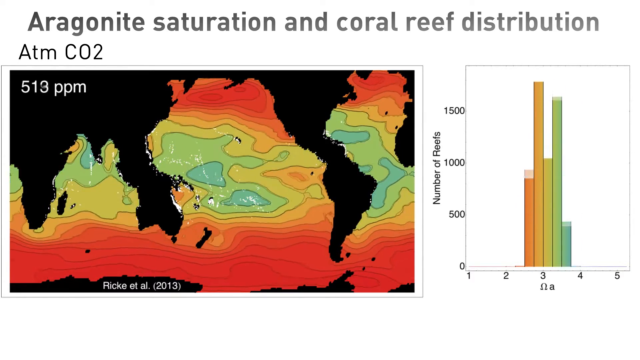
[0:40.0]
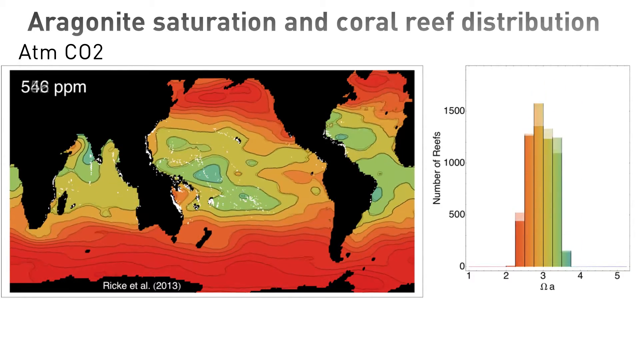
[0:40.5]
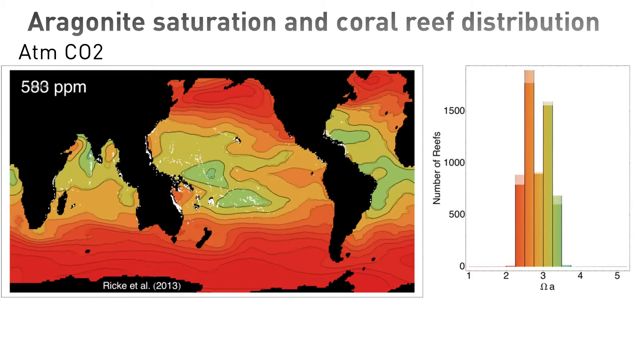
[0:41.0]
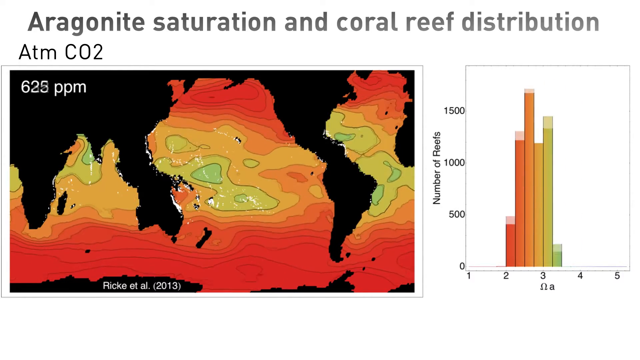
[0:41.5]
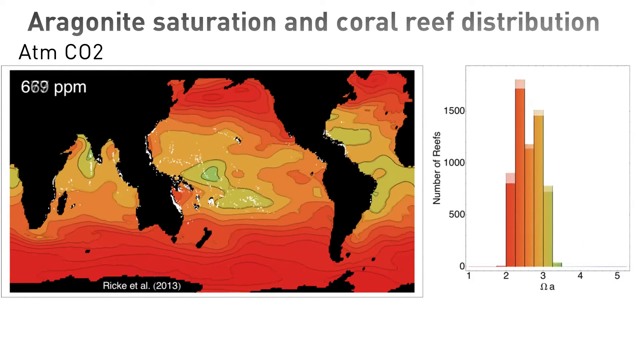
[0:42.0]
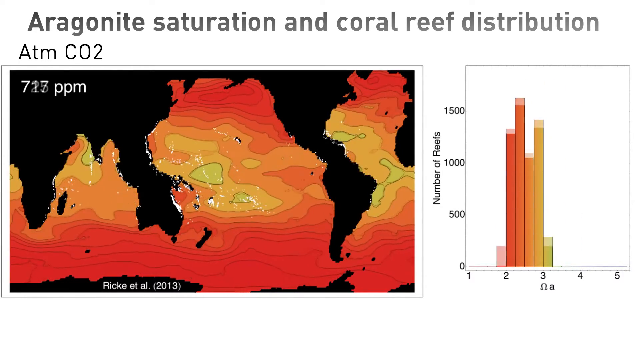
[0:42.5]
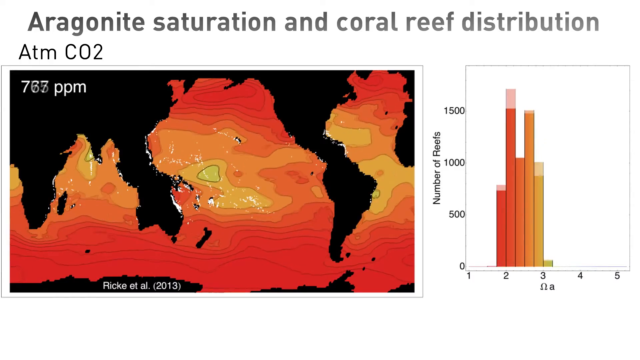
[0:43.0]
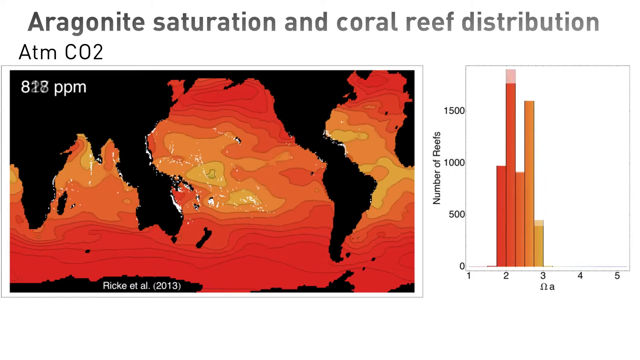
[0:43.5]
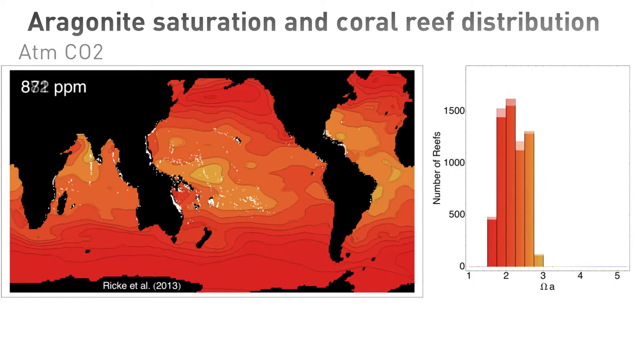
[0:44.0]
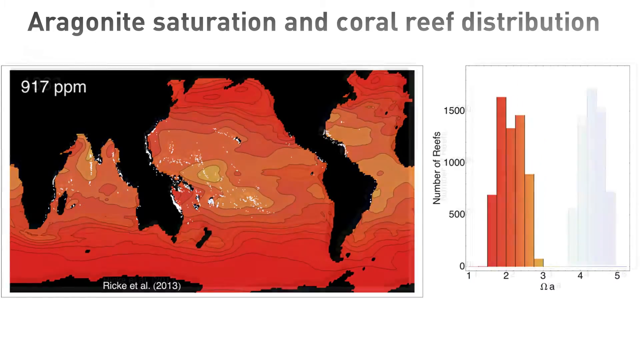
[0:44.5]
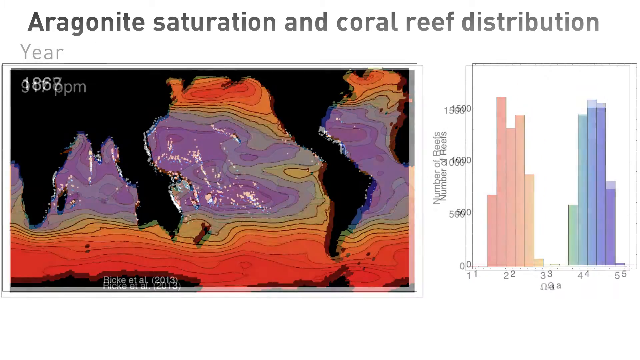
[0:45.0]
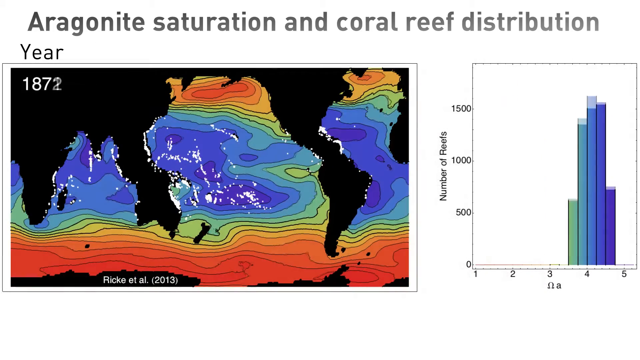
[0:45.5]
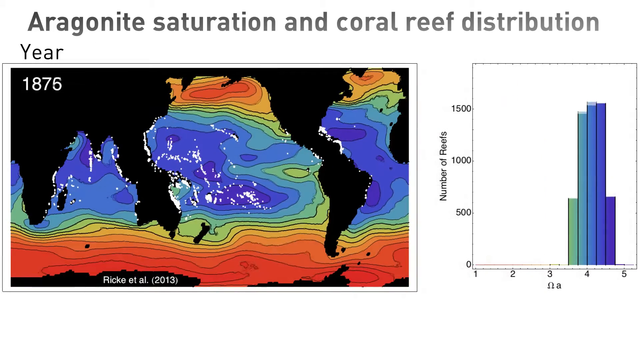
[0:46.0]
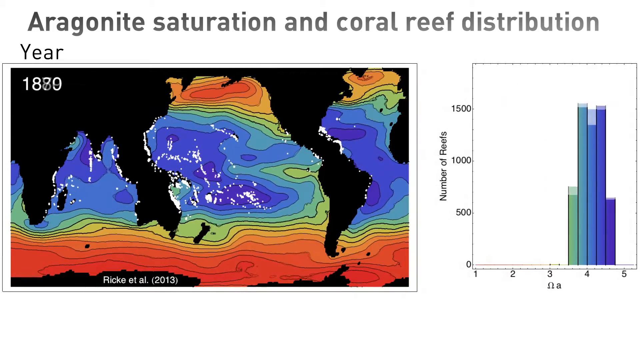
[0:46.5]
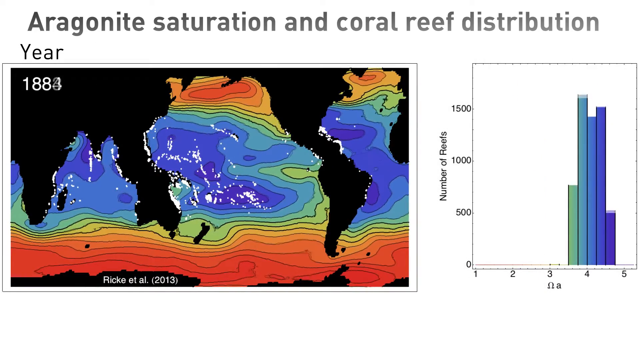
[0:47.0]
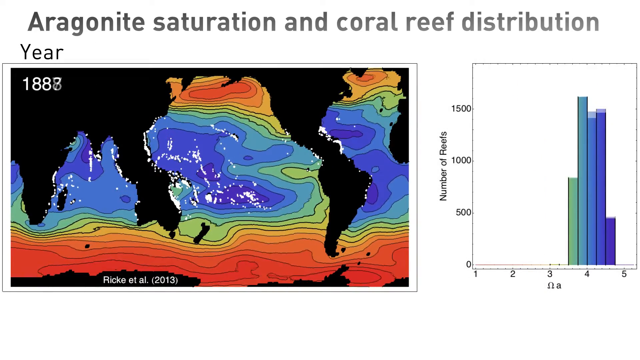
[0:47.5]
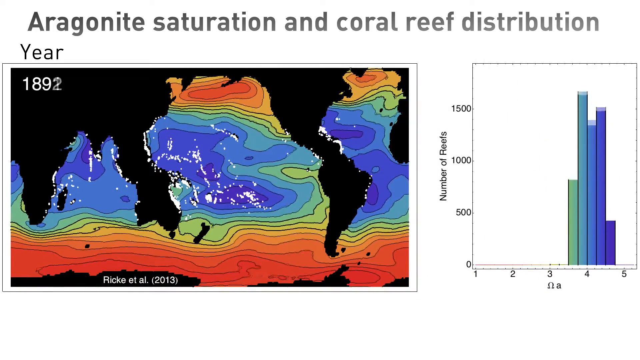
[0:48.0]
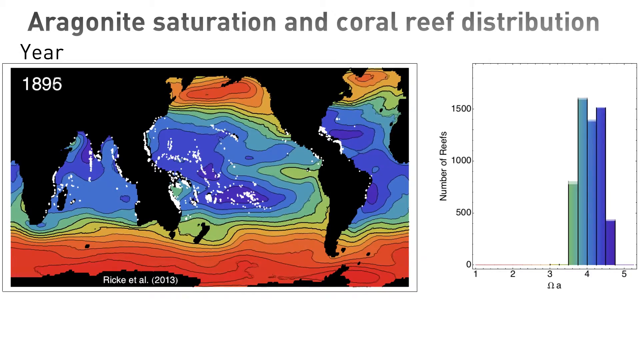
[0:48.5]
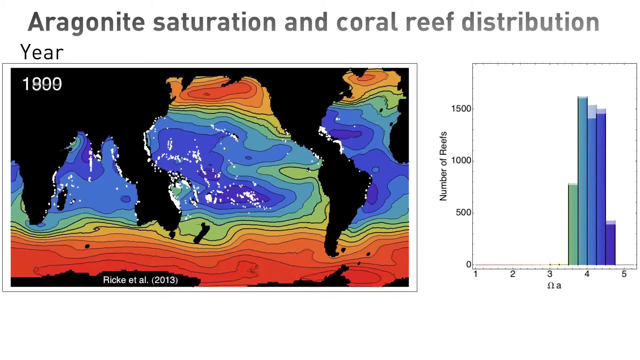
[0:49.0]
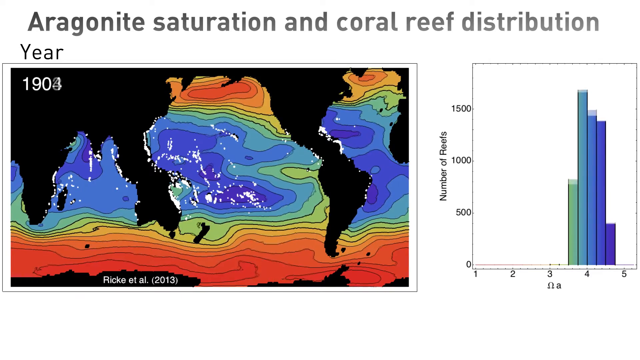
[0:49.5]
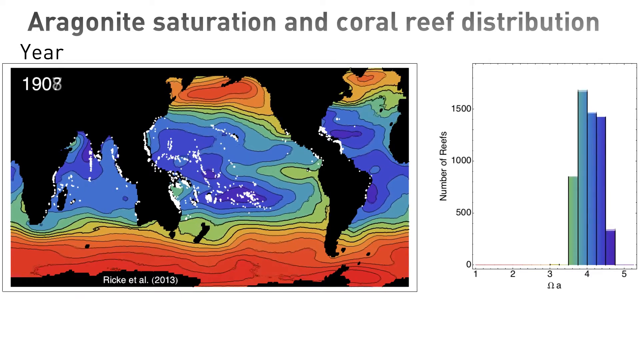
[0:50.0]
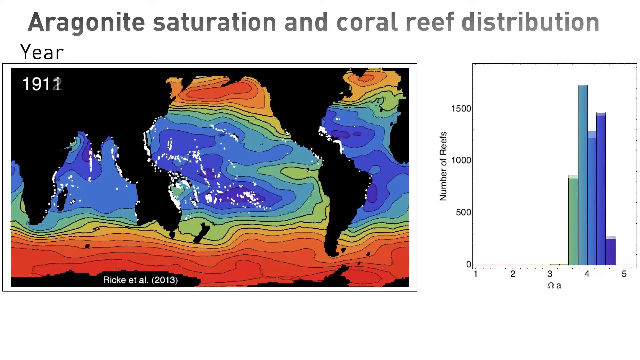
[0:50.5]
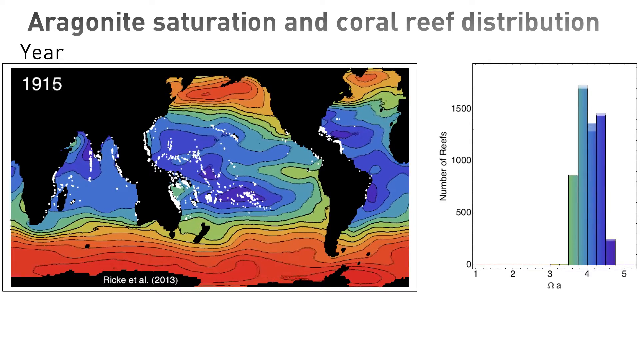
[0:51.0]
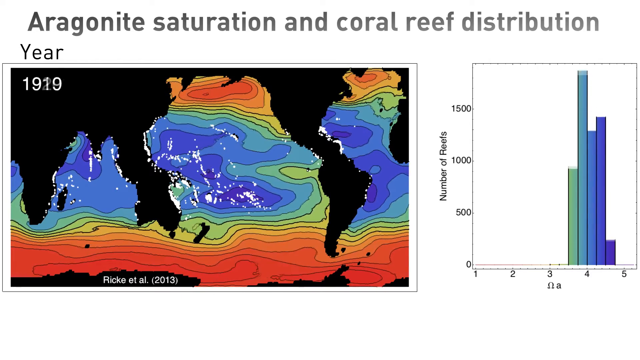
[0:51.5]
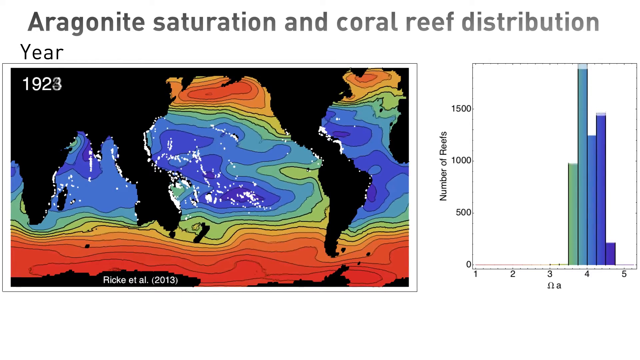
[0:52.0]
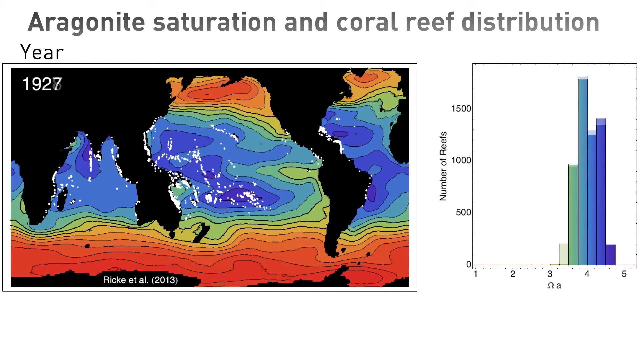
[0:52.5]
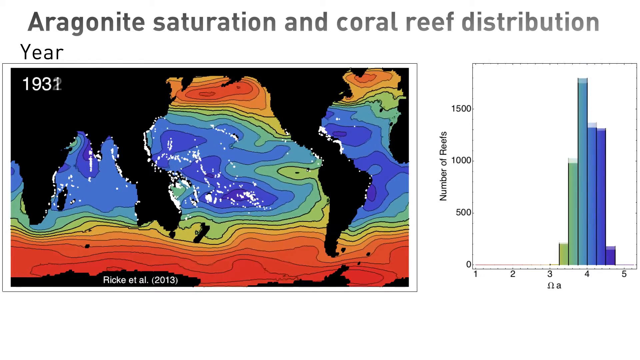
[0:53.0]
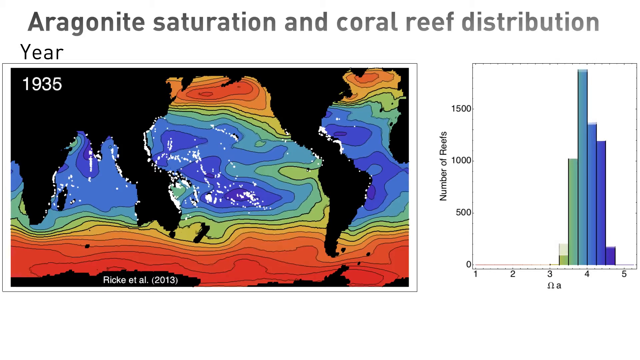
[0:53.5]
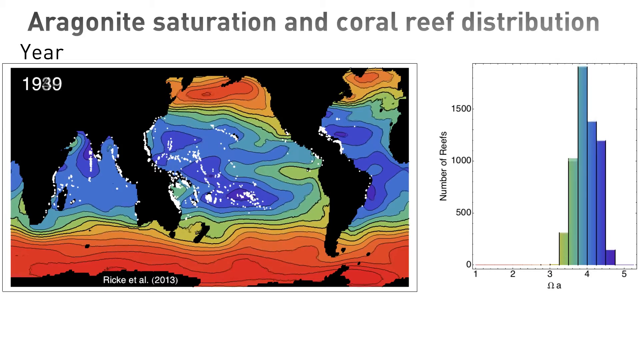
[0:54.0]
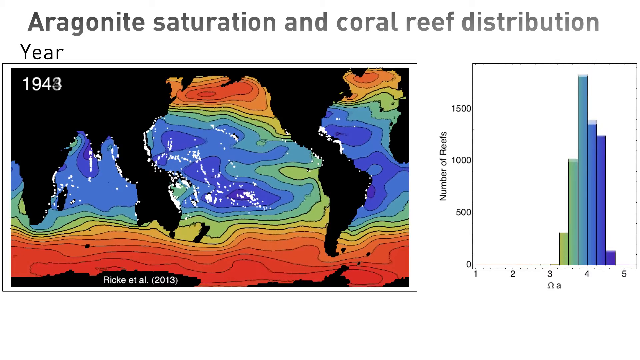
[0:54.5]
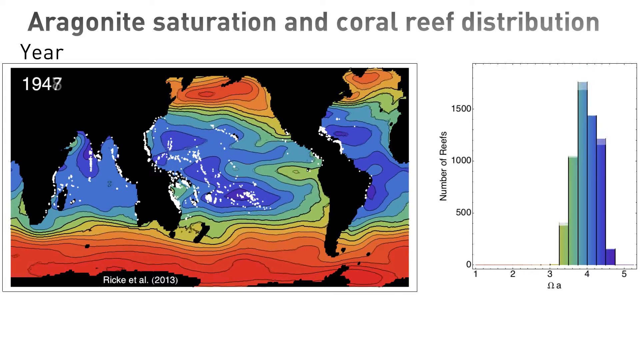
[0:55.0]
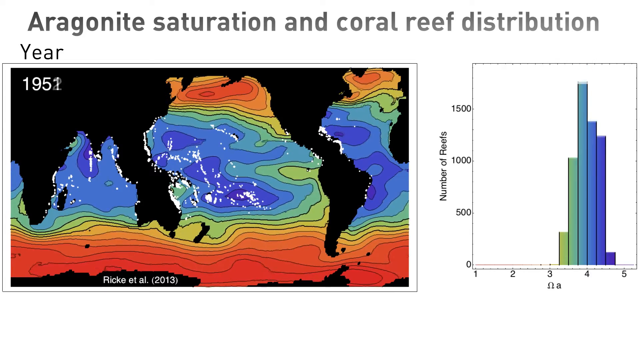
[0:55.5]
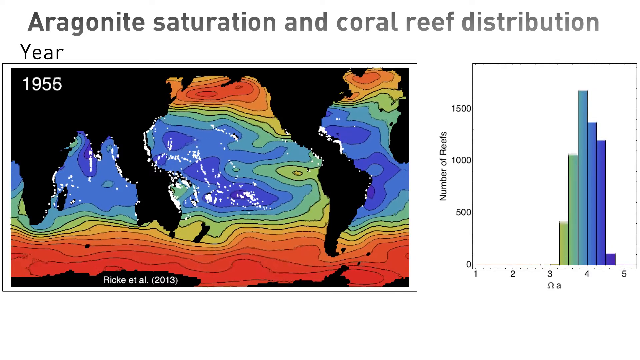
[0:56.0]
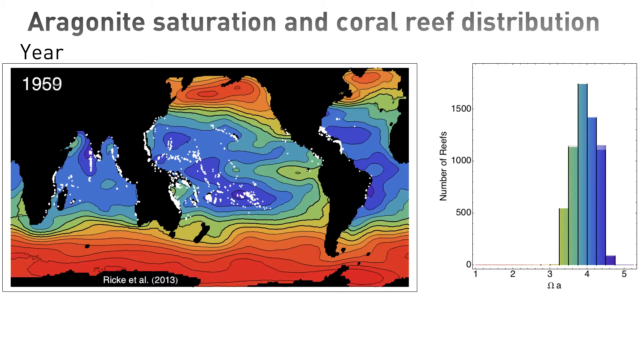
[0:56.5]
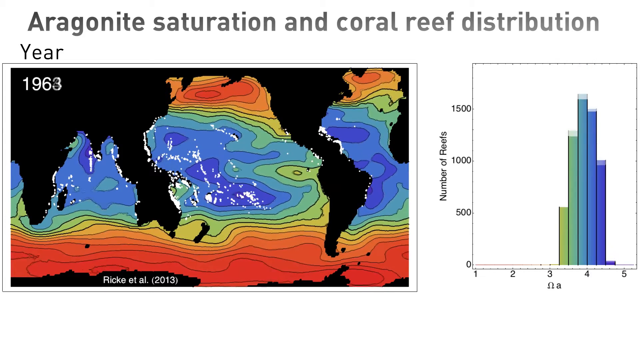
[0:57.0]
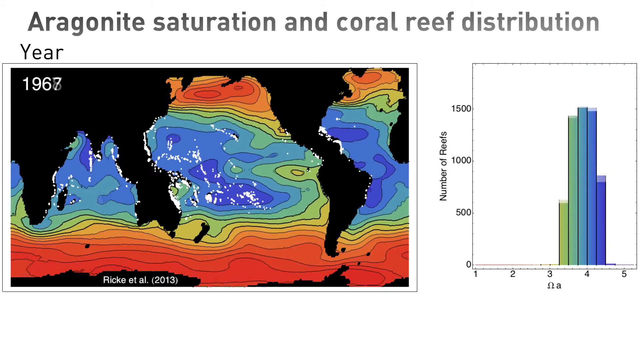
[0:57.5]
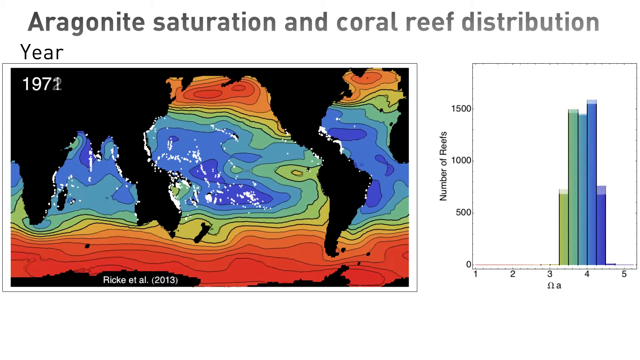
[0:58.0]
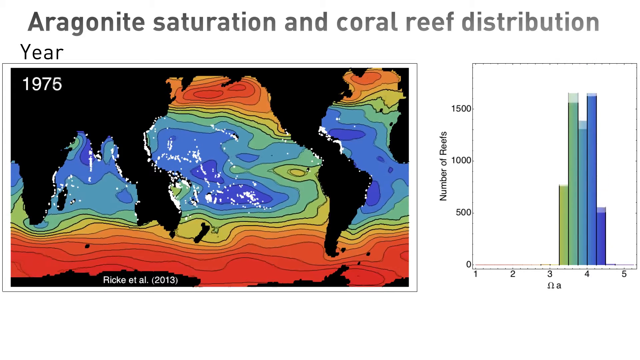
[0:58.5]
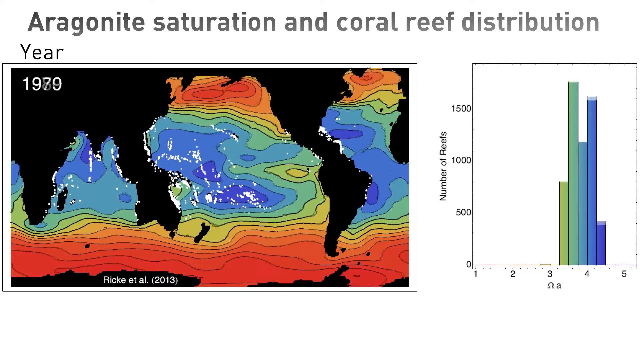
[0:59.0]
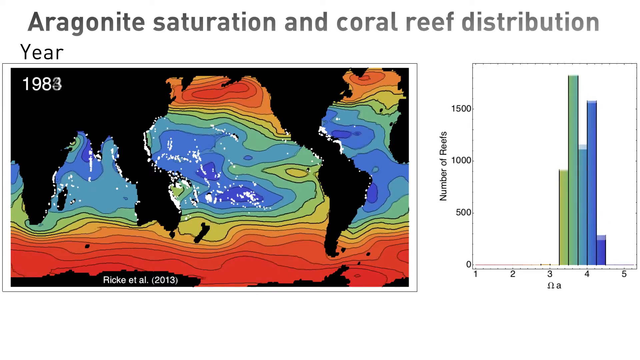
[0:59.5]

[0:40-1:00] A page shows a graph on the right side and a depiction of the Earth on the left side, measuring the ppm in the ocean. The graph on the right has "Number of Reefs" on top, with bars near the value of three on a bottom axis running from one to five. Its left axis runs from zero up to what looks like two thousand and is labeled "Number of Reefs." On the left, a big square holds the depiction of the Earth with the ocean, and a number in the top left reads "513 ppm." As the ppm increases, the bars on the graph change colors and move up and down, and at the same time the ocean changes color, the red disappearing and being replaced by yellow. By 750 ppm the graph mostly has orange and red colors, and the ocean is almost completely taken over by orange, with one light green spot in the middle. At 827 ppm the ocean is almost all red with a little yellow in the middle, and in the bar graph the bar at the value two goes all the way to the top.